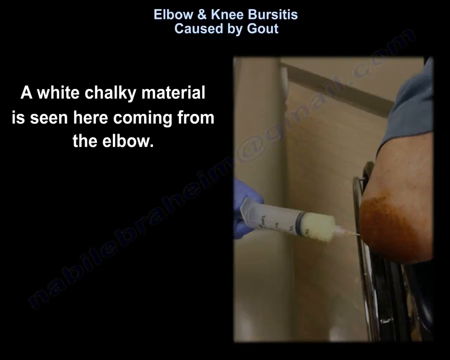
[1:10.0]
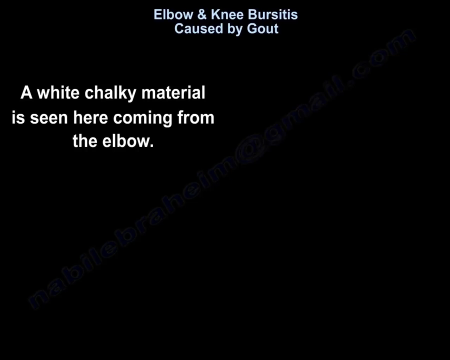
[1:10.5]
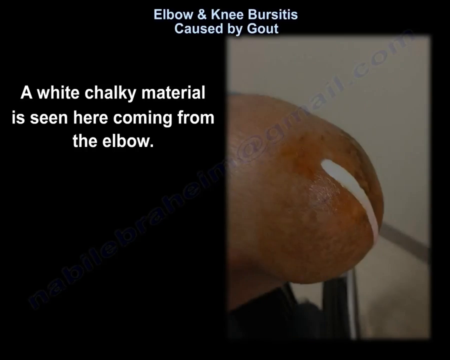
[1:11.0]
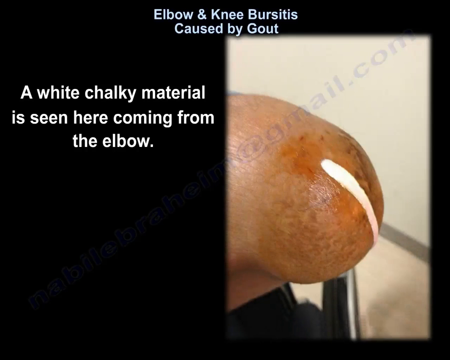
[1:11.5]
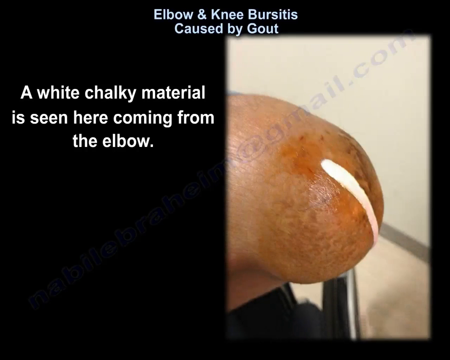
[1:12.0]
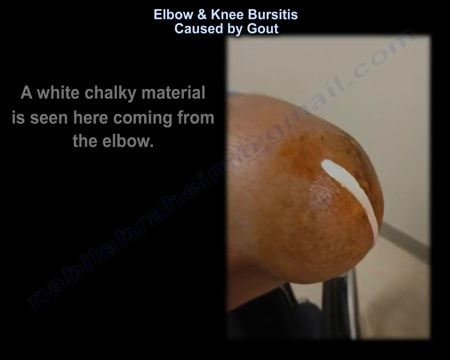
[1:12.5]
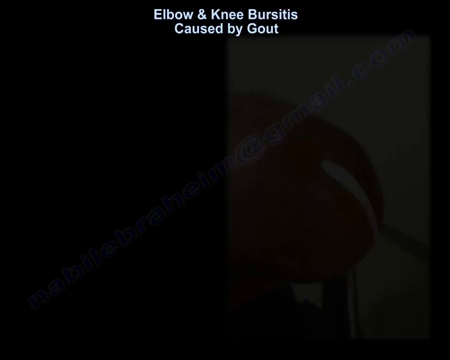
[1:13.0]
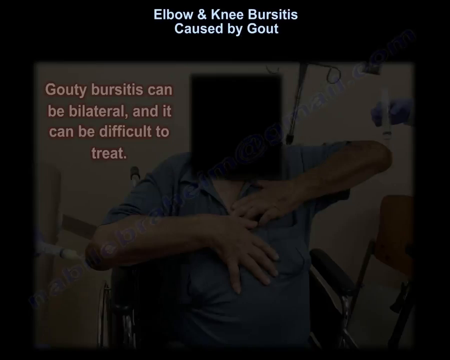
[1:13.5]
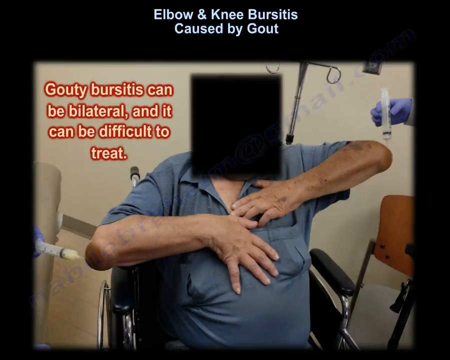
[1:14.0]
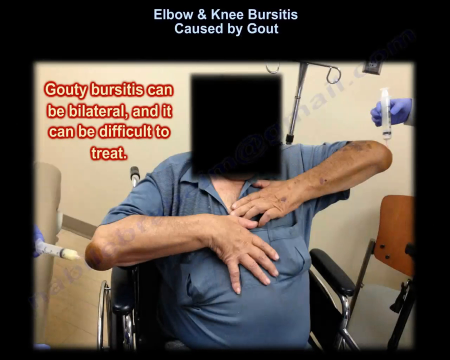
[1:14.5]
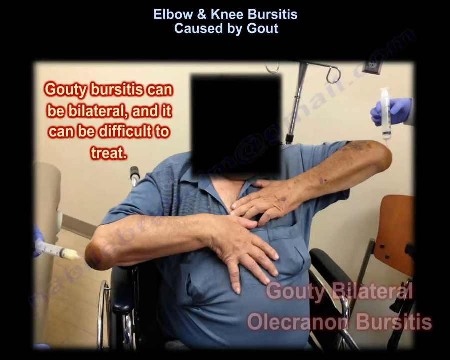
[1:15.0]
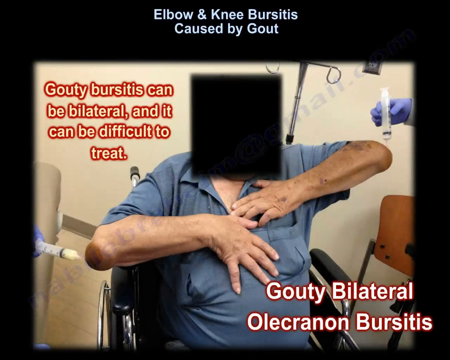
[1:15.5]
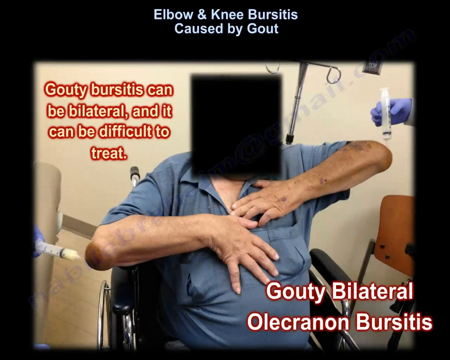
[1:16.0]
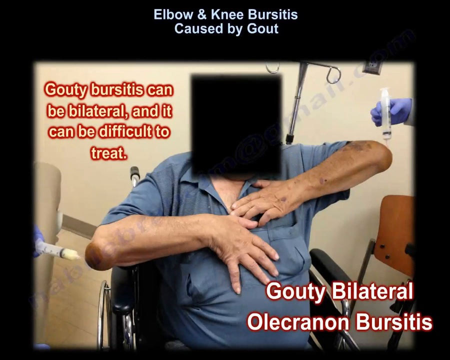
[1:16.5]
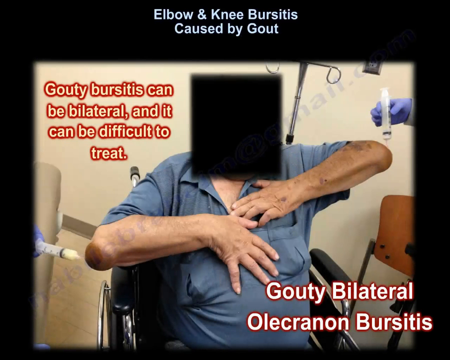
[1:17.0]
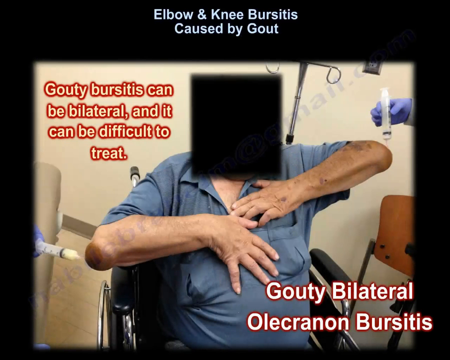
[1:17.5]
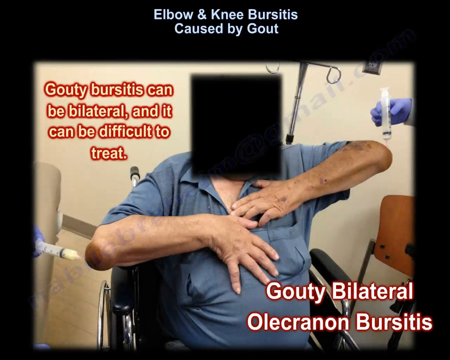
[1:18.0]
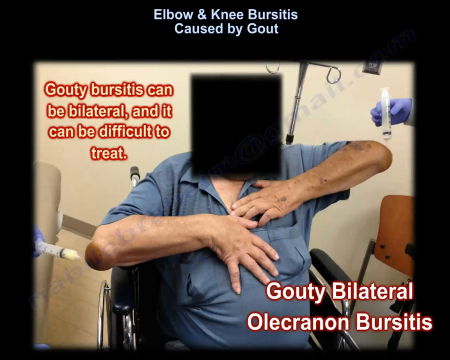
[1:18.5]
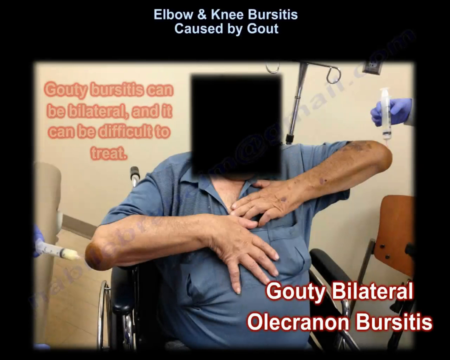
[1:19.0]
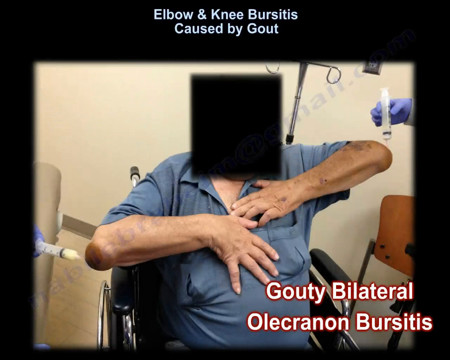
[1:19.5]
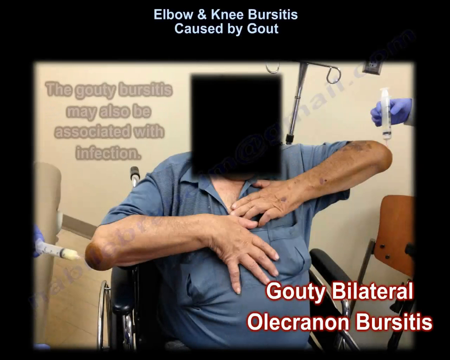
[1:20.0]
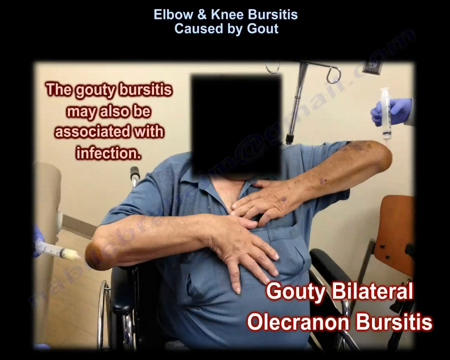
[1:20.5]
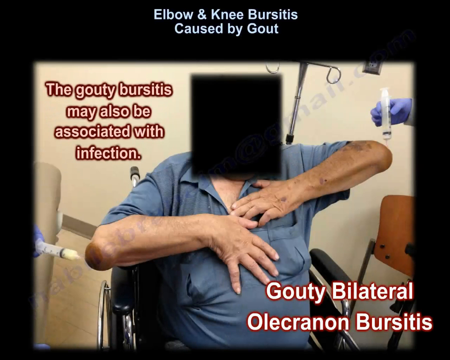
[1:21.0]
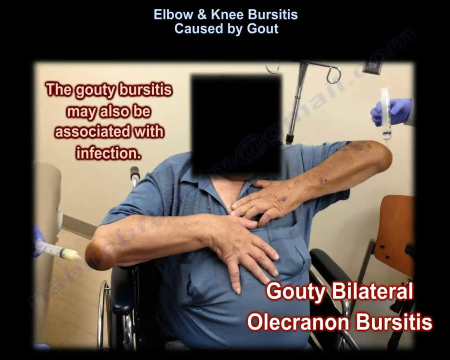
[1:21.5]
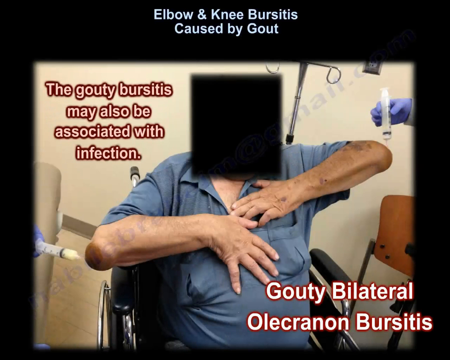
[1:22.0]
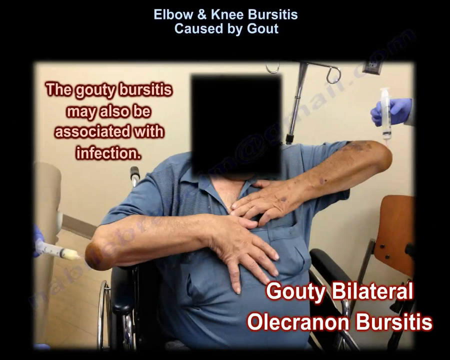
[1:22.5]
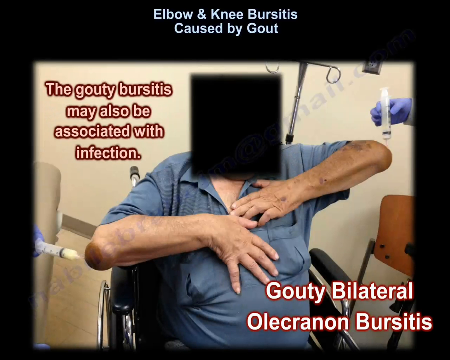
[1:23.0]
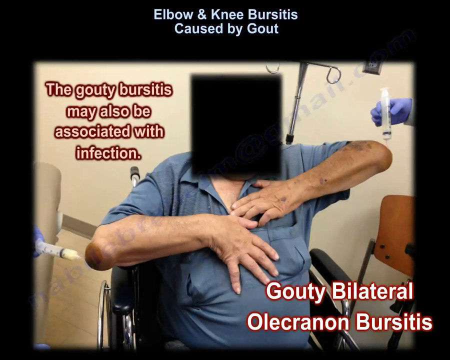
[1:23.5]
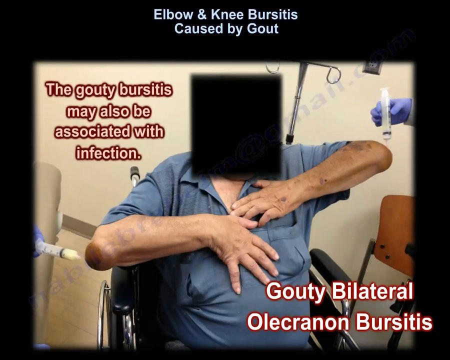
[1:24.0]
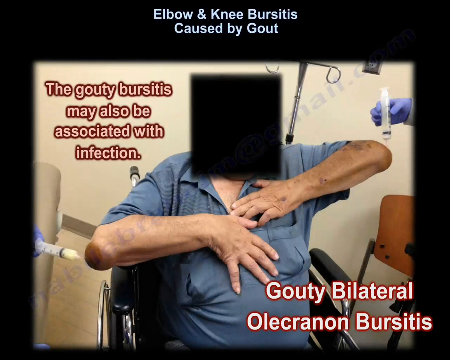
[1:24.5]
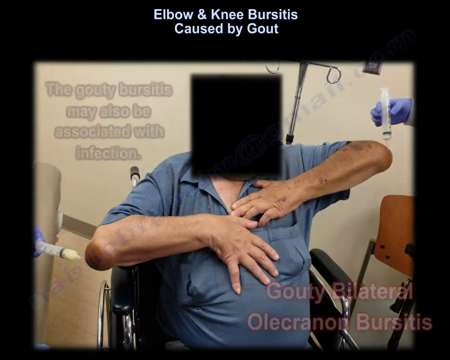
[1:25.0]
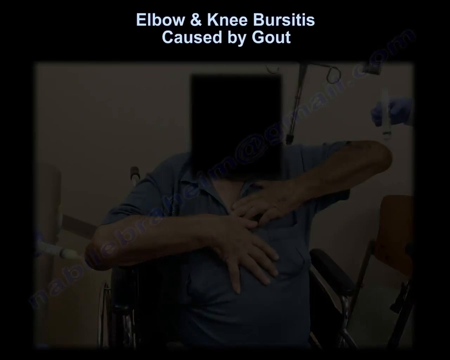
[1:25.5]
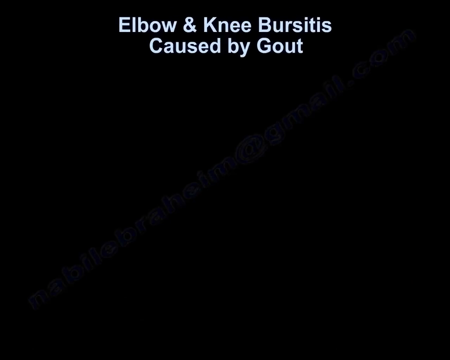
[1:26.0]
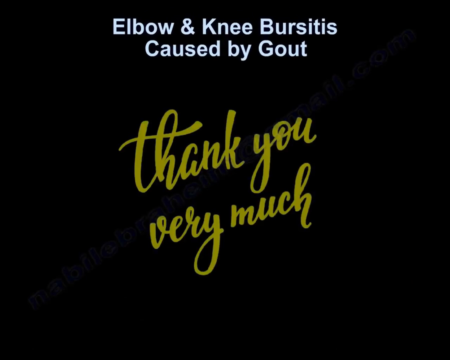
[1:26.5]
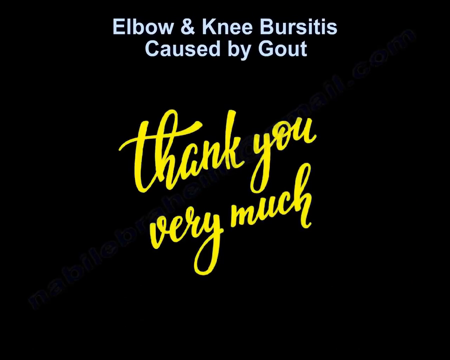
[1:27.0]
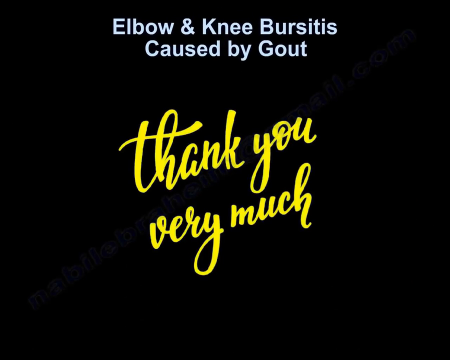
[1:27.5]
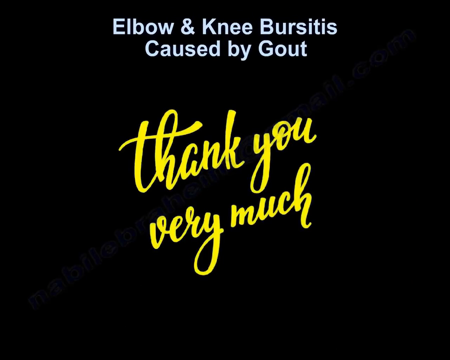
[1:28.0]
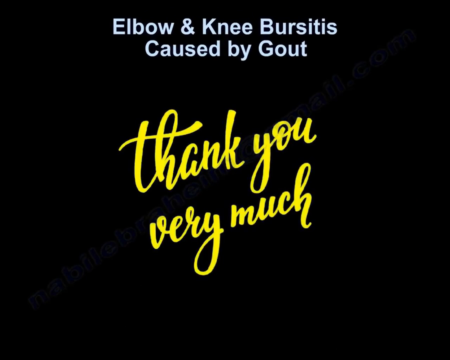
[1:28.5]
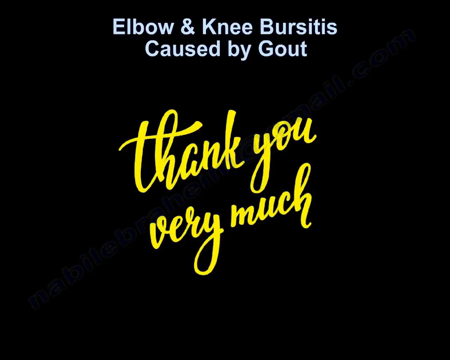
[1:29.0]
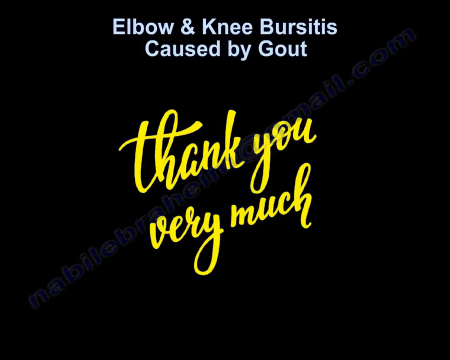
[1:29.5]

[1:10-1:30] Against a black background, a title at the top reads "elbow and knee bursitis caused by gout". An image shows an elbow that looks like it has a brown coloring on it, and a medical professional with a needle seems to be pulling fluid from it. To the left of the image, white text reads "a white chalky material is seen here coming from the elbow". Next, an elbow is shown with the white material coming out, without the needle present. Then an image shows what appears to be a patient, who looks like an older man or woman, wearing a blue collared shirt, with the face blacked out. There appear to be two medical professionals working on them, removing the chalky material from the elbows with a needle. The person is sitting in a wheelchair with their hands on their chest. Next to the blacked-out face, text reads "gouty bursitis can be bilateral and it can be difficult to treat".